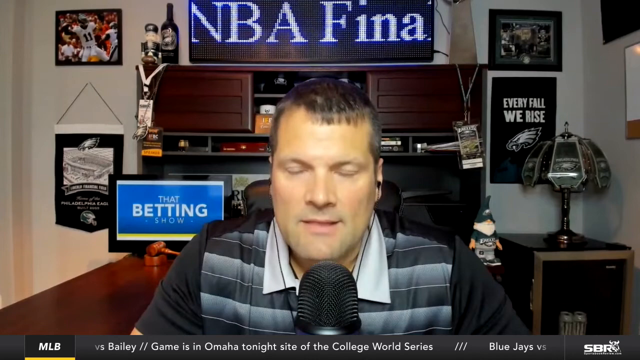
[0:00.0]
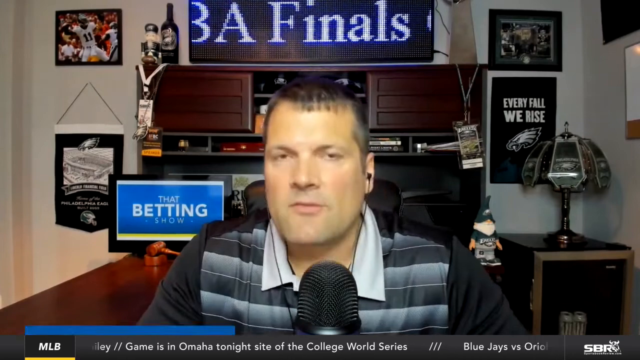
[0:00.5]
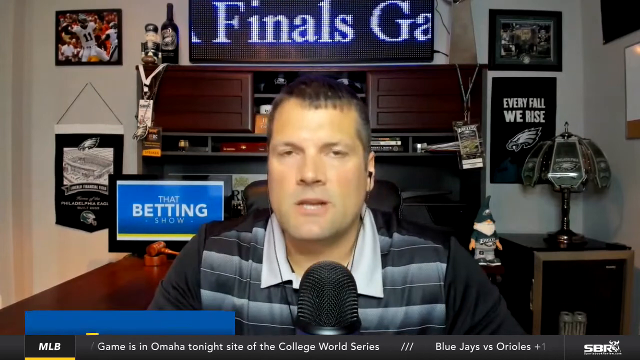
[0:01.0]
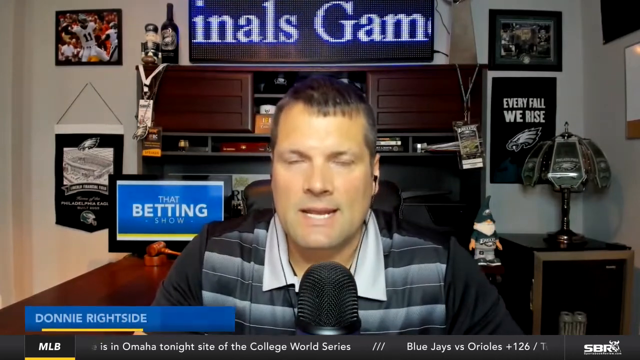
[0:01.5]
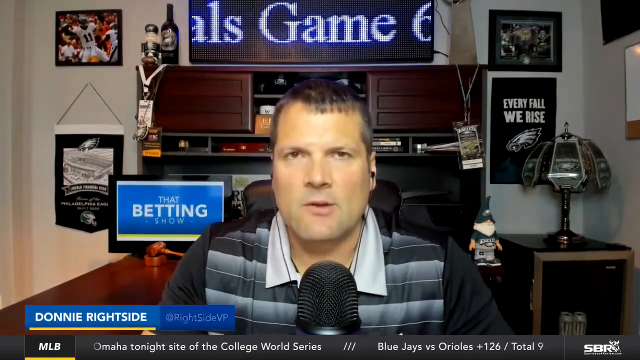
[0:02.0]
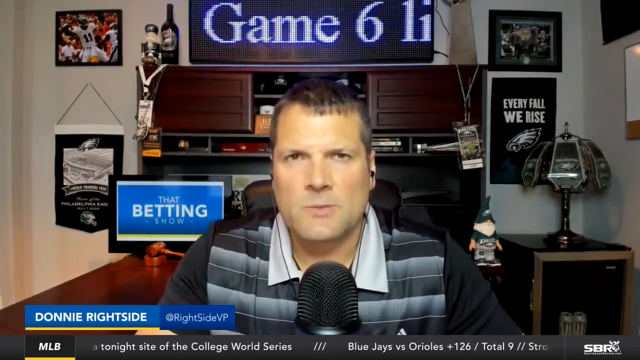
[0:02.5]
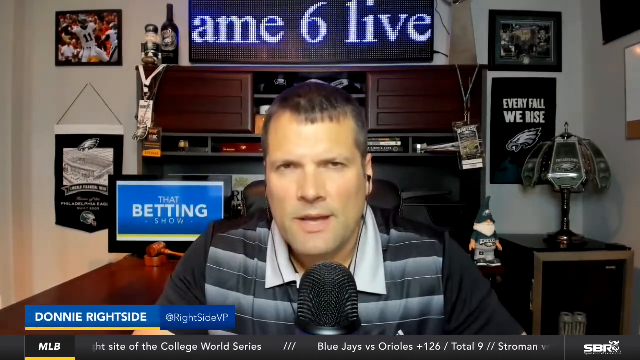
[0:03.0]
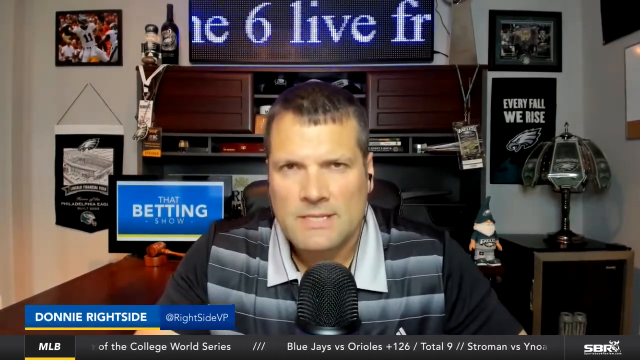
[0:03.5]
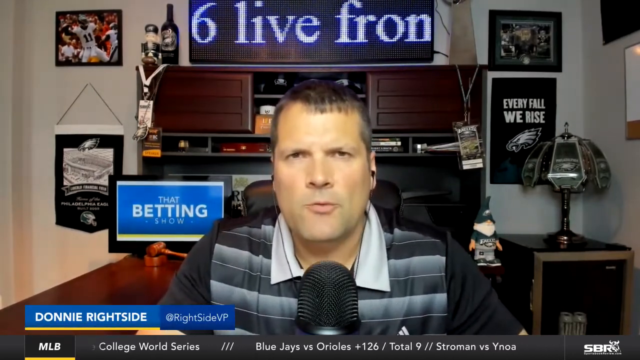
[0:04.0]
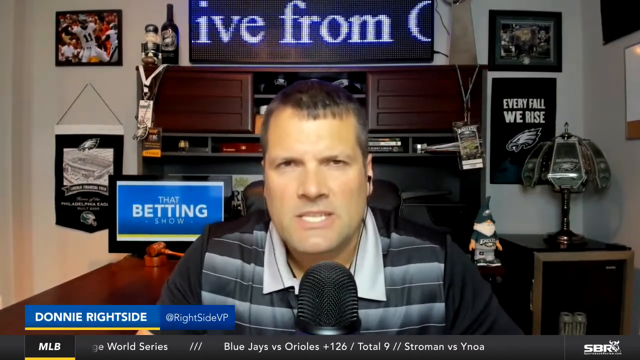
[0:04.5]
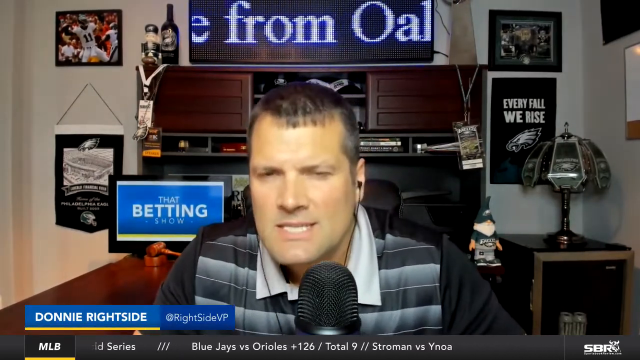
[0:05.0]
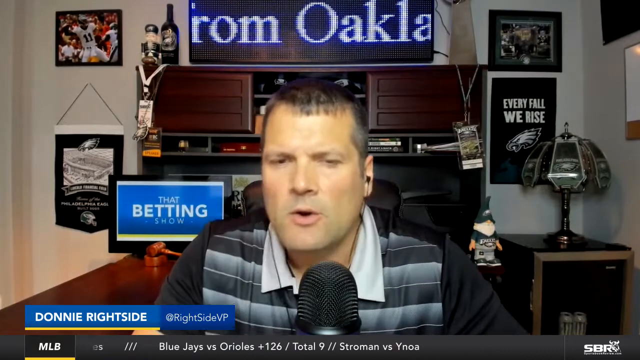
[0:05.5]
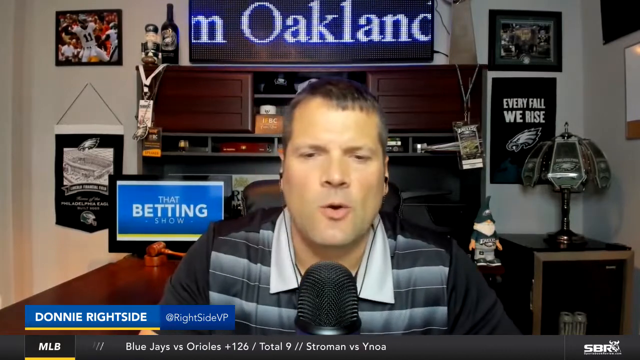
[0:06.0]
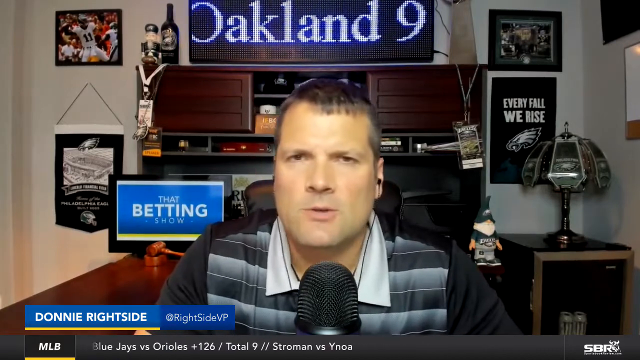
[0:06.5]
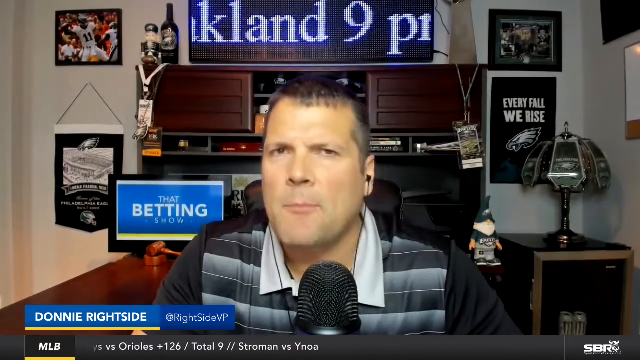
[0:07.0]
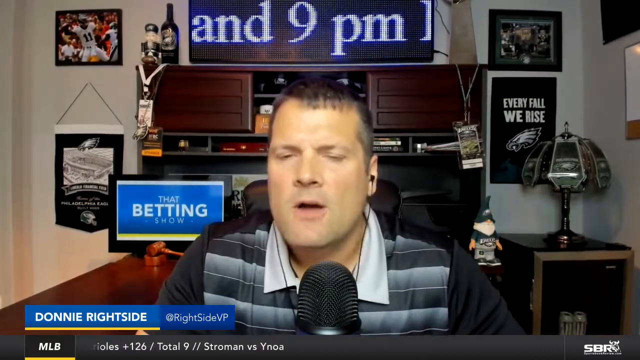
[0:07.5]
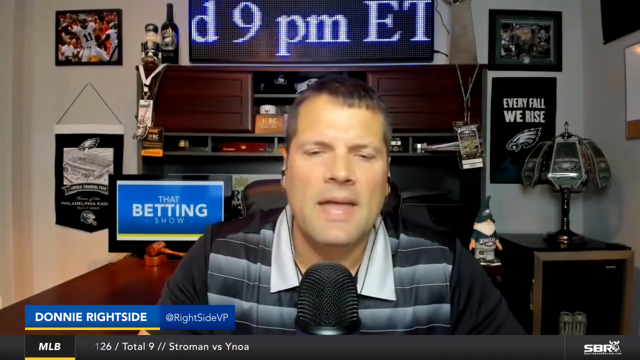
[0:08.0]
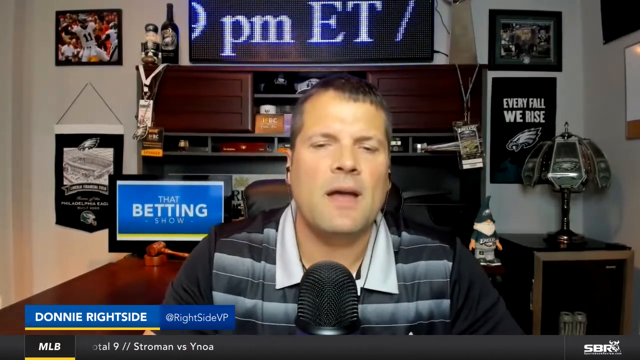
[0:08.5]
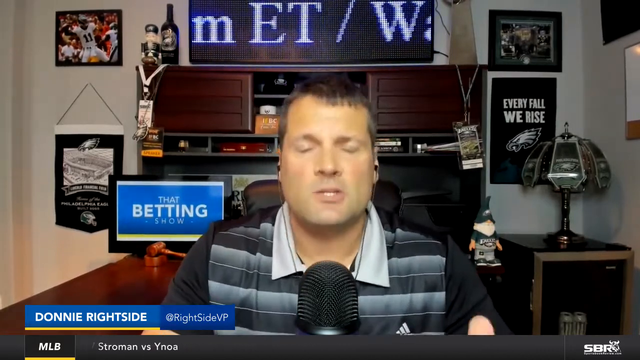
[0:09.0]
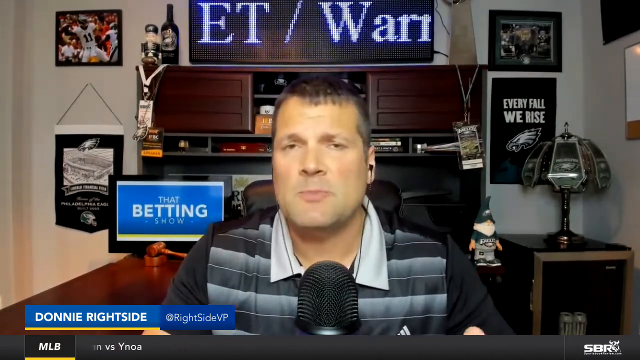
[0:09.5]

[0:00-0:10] A man, possibly a podcaster, talks behind a microphone whose top is at the very bottom center of the frame. He sits behind it facing the camera, making eye contact with the viewer. He wears a collared shirt, kind of a rugby-type shirt, with multiple gray horizontal stripes. He is maybe in his 30s, with short dark hair, and has earbuds in each ear with wires coming down across his chest. The background looks like his home: a wall with kind of a desk and cabinets in the back, and some pictures against the wall. On the right side is a banner that says "Every fall we rise" with a Philadelphia Eagle logo beneath it, and a faux Tiffany lamp on a table in front of it. He talks a lot, his lips moving very fast, and he leans in occasionally and then leans back. His hands are not visible. Behind his right shoulder, on the left side of the frame, is a blue sign that says "That Betting Show" in white text, with "Betting" larger than the other words. In the top center, what looks like a mini digital scoreboard above the desk has a crawl of white words across it reading "Game 6 Live from Oakland 9 p.m. ET/ Warriors". The scoreboard appears to be a real one in the room, not a graphic added to the video.